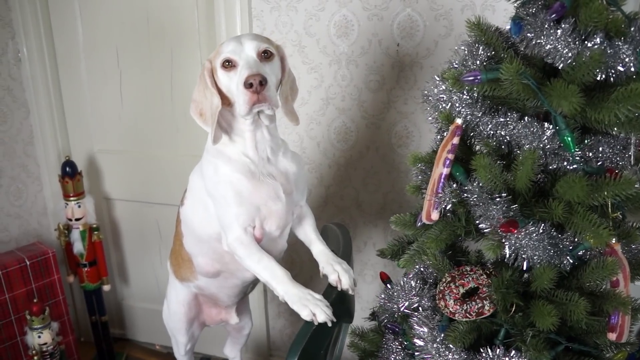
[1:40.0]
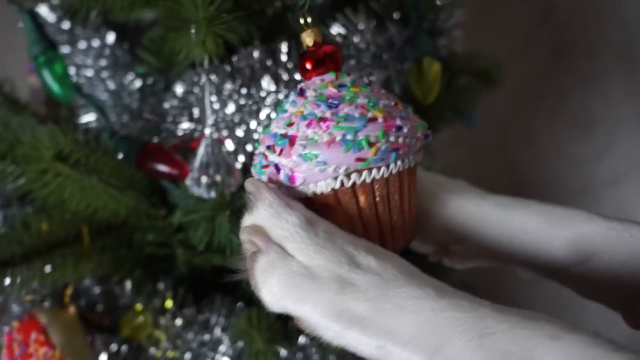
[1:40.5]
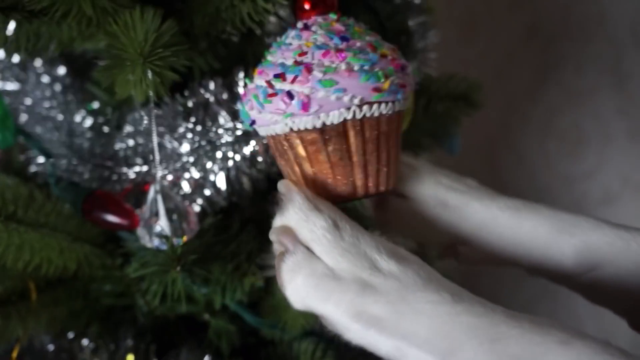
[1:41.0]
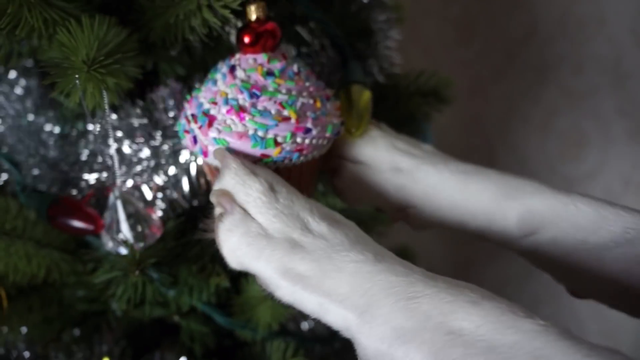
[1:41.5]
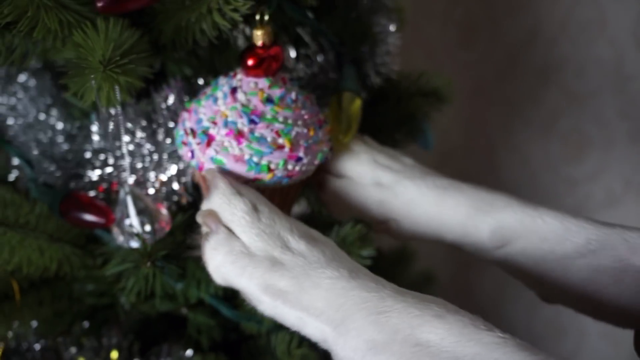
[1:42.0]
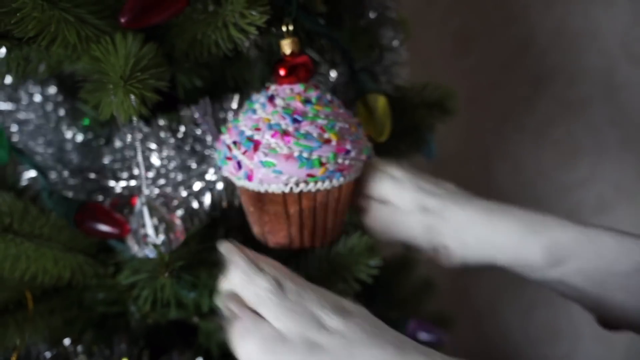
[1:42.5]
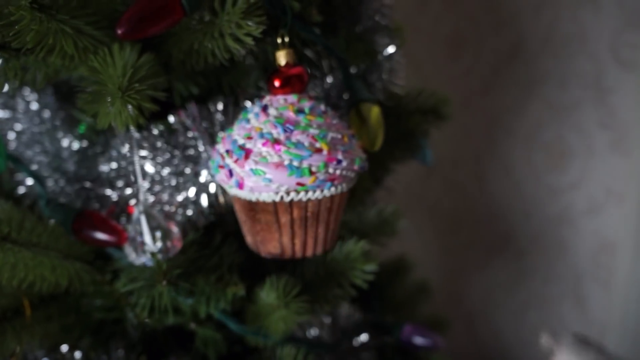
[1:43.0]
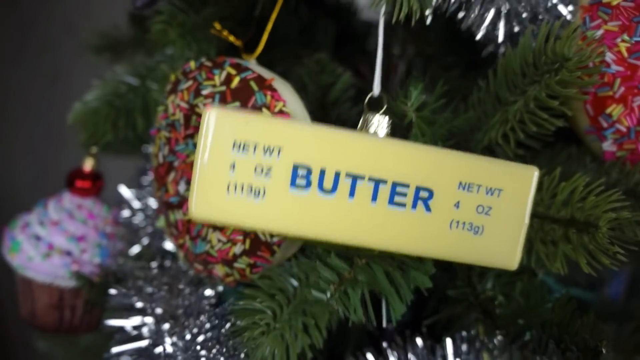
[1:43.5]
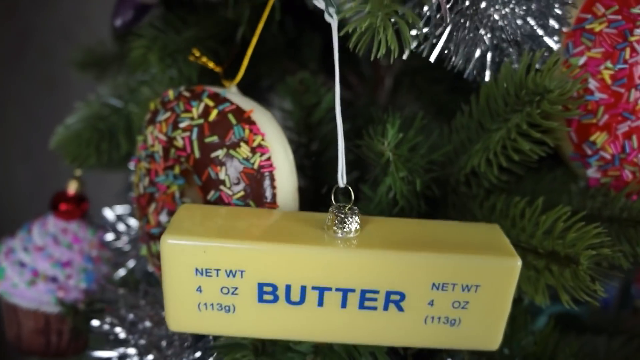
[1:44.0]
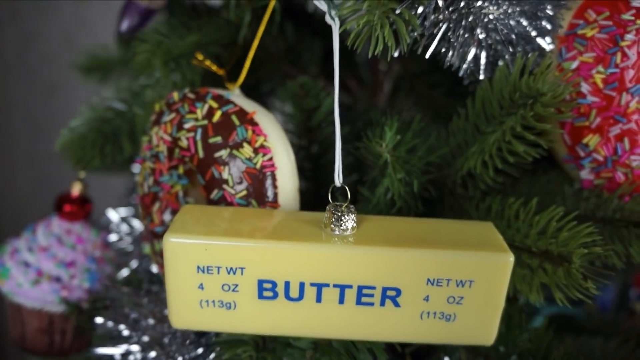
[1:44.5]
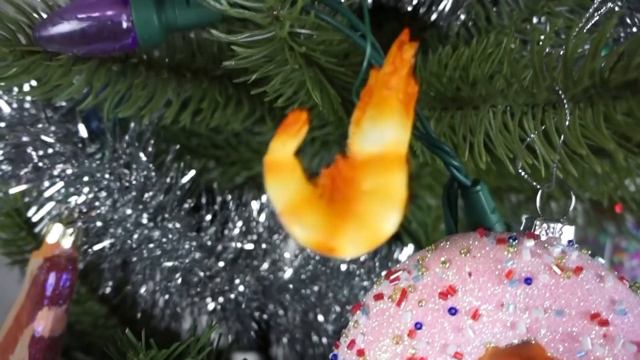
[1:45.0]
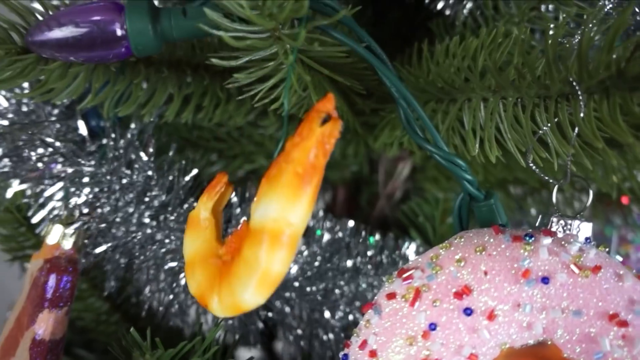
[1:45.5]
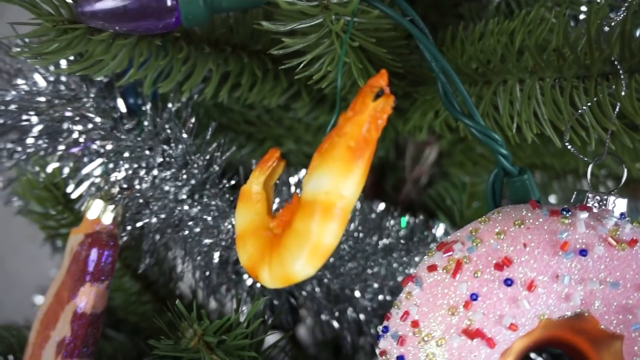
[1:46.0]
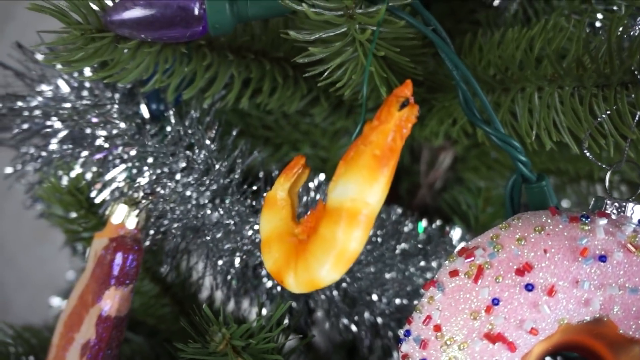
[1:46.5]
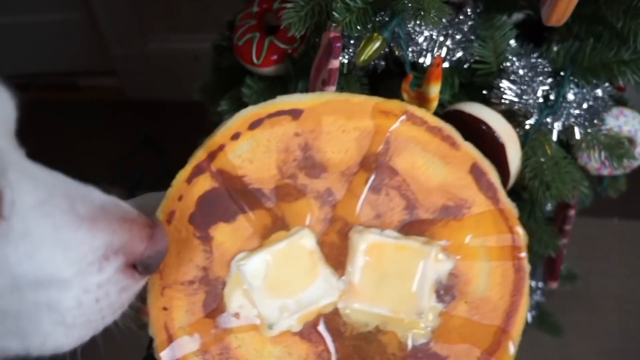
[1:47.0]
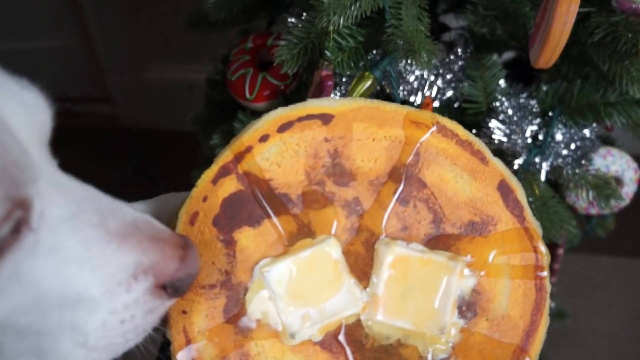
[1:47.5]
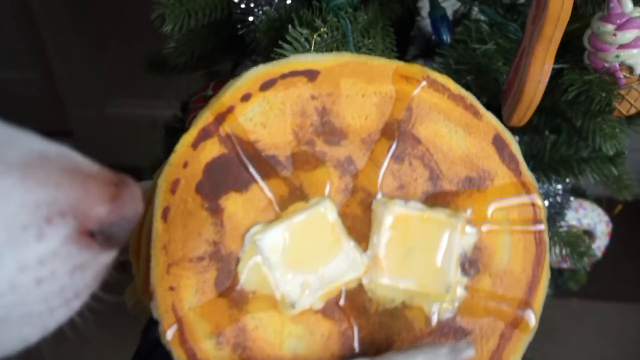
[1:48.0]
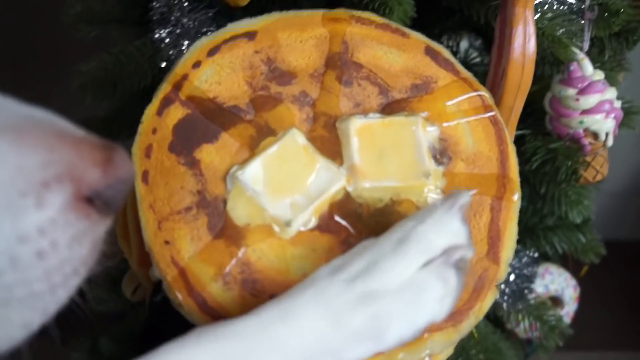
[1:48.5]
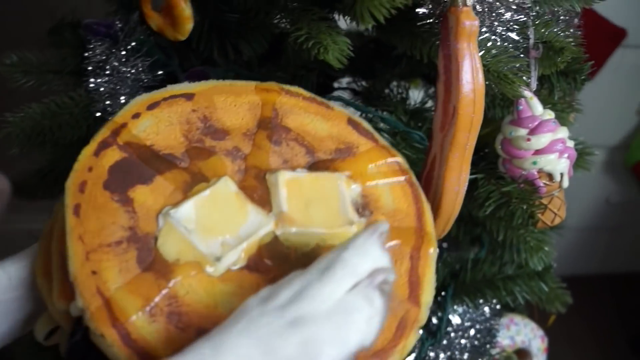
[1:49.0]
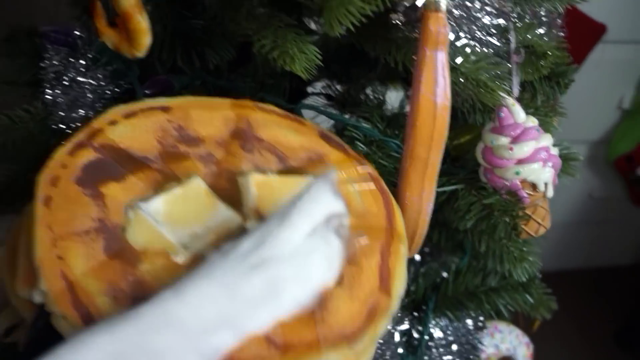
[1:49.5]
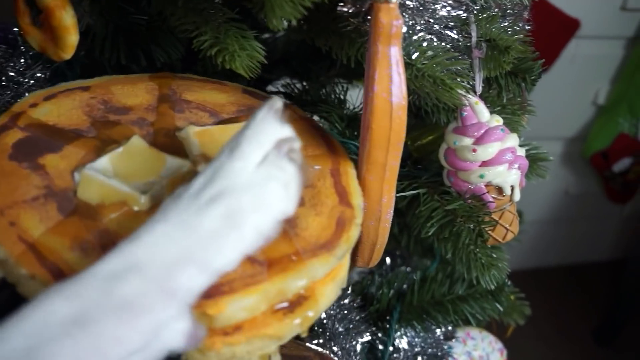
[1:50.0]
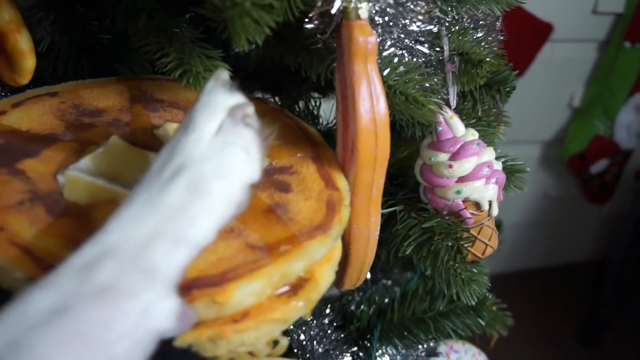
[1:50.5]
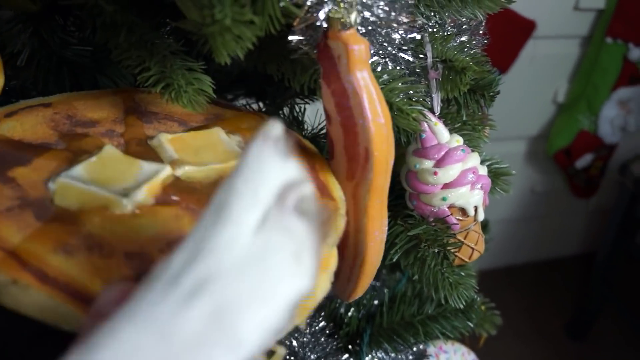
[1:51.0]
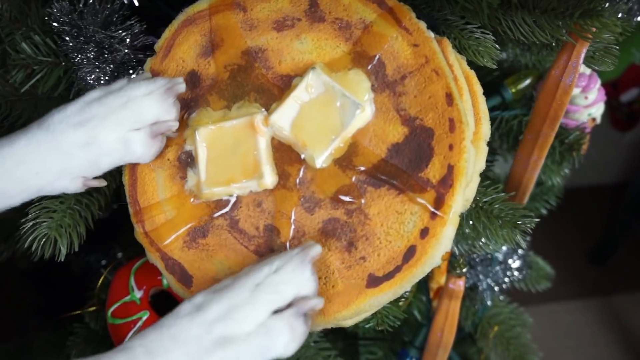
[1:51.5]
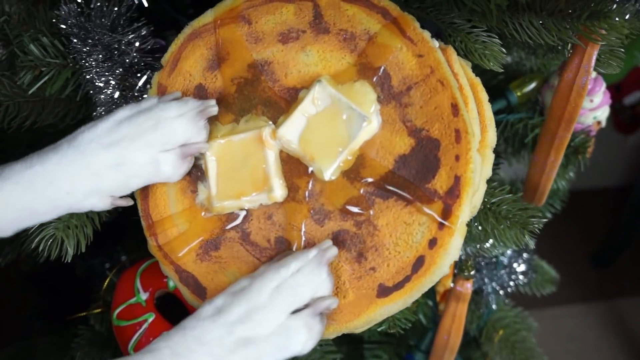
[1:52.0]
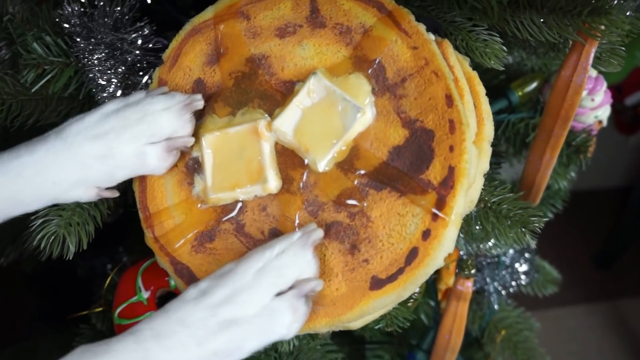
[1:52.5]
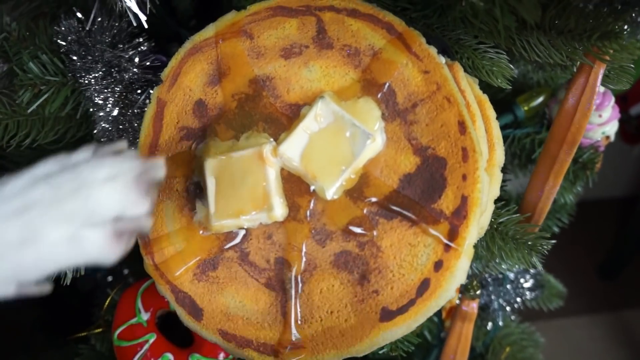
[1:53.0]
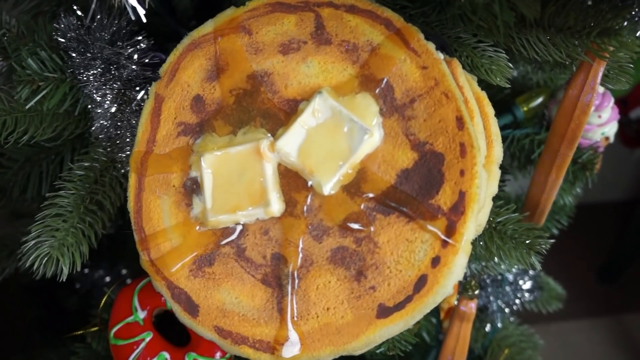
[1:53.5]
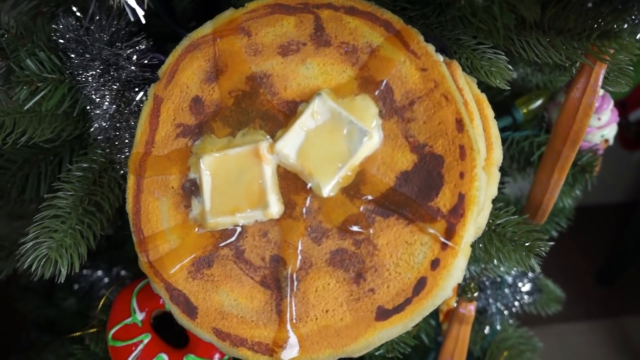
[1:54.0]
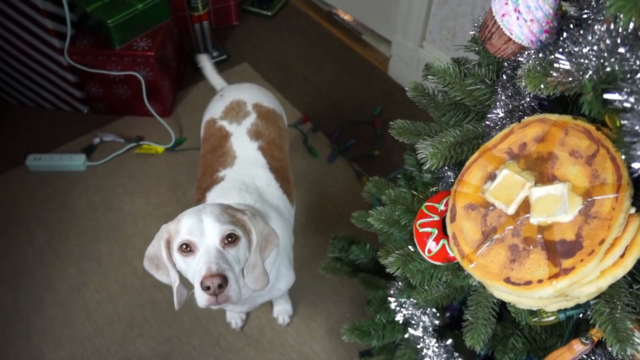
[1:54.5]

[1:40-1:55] The dog hangs more ornaments on the tree using both paws: a cupcake ornament with light purple and white icing and sprinkles, a stick of butter that says "butter" on it in blue, a stack of three pancakes with two pats of butter and syrup on top, and a piece of shrimp. The tree is becoming full of ornaments.